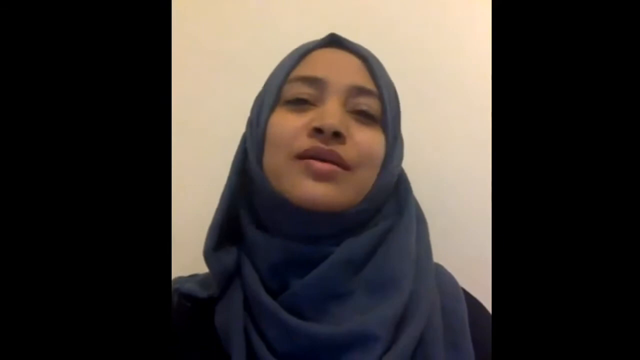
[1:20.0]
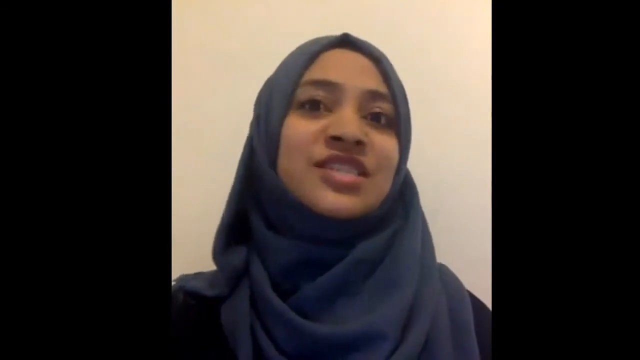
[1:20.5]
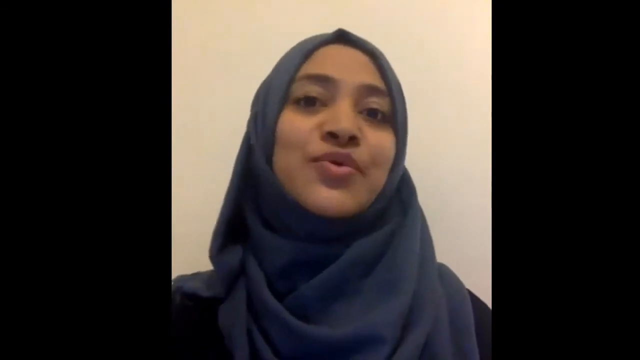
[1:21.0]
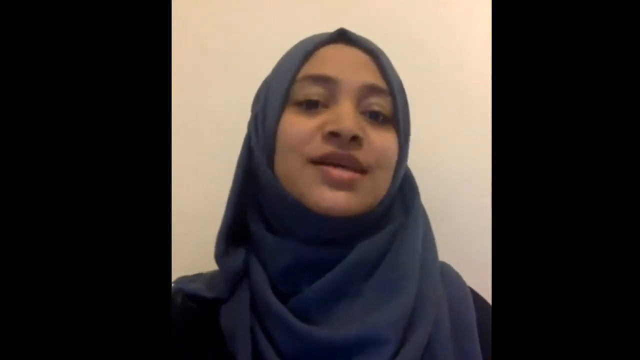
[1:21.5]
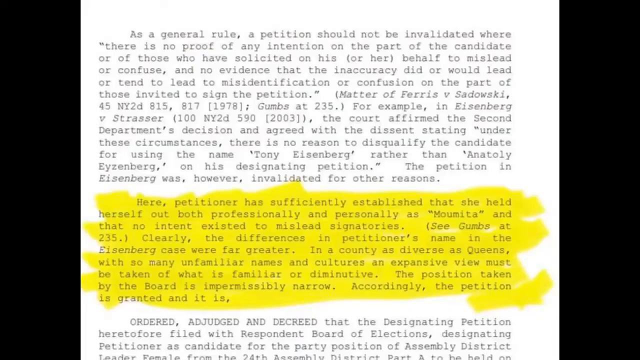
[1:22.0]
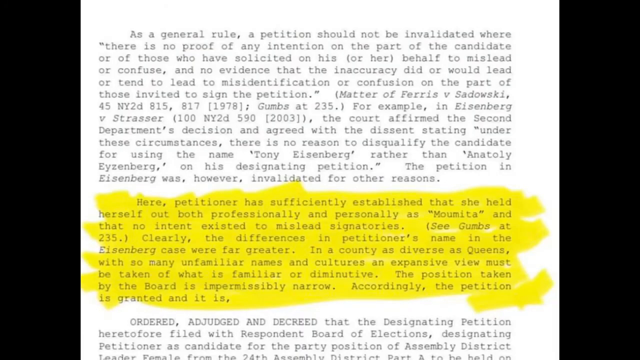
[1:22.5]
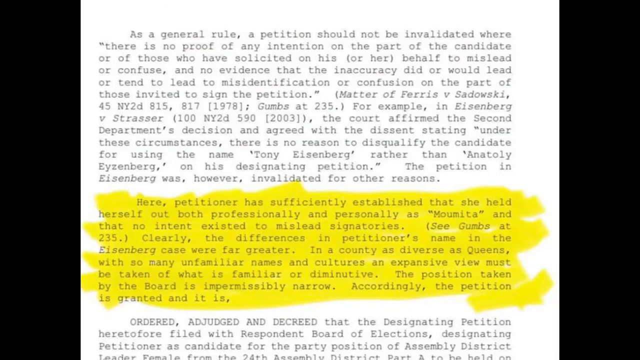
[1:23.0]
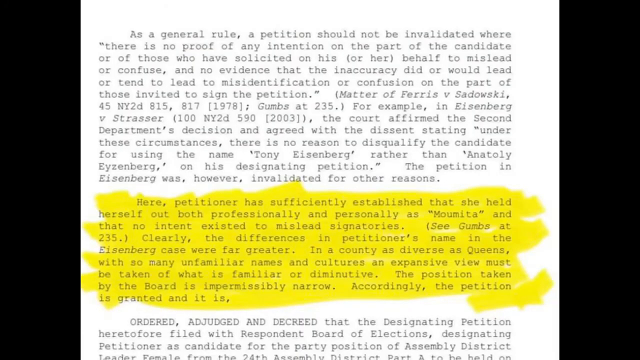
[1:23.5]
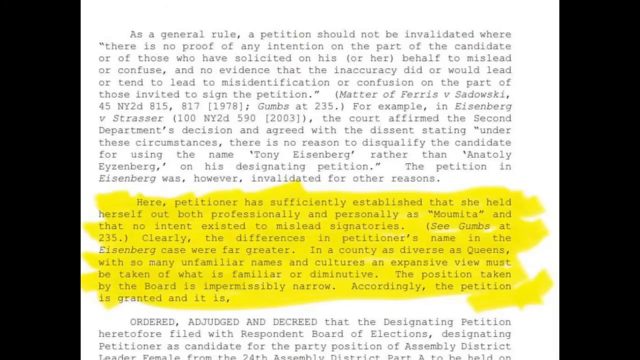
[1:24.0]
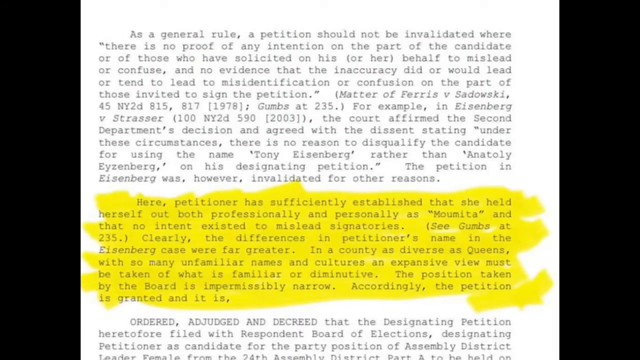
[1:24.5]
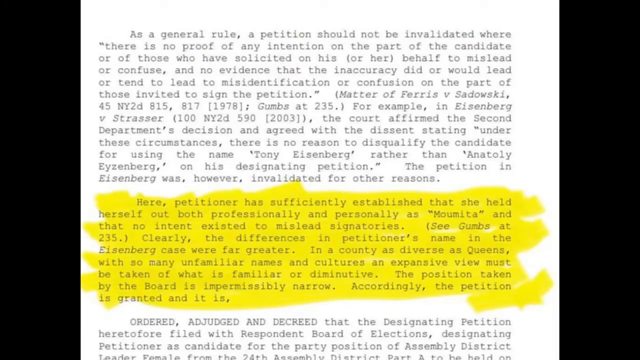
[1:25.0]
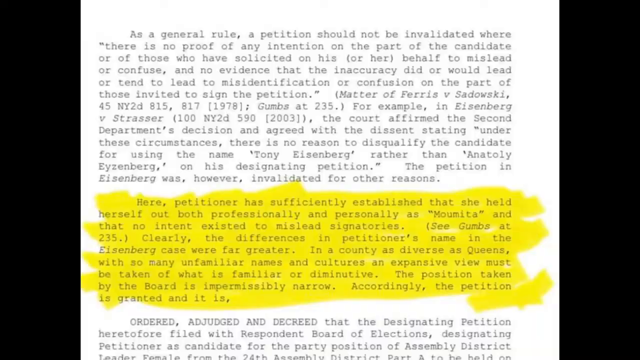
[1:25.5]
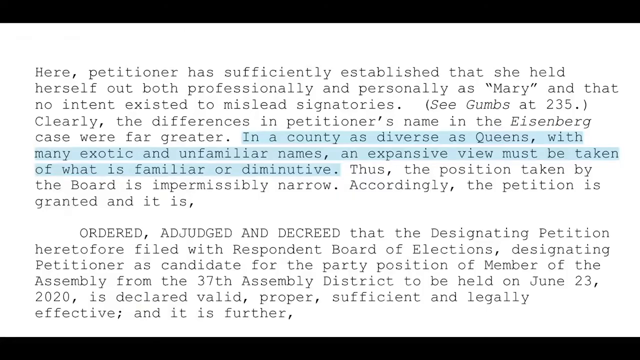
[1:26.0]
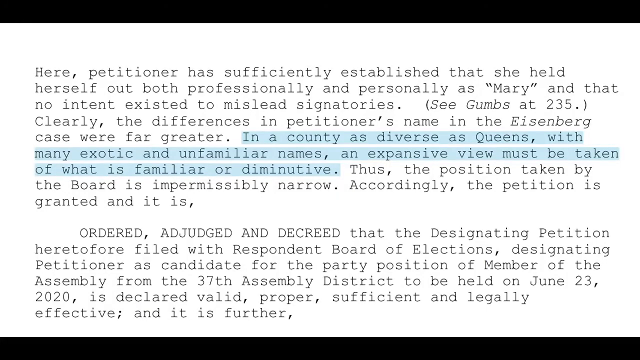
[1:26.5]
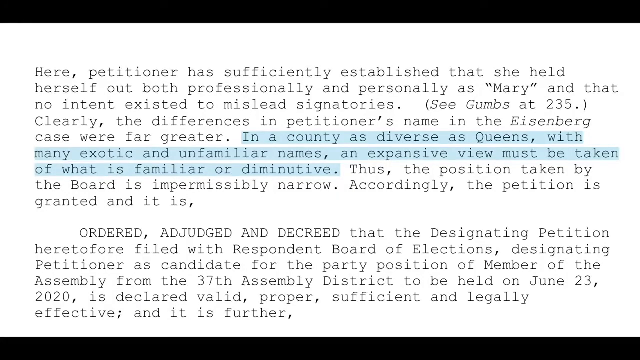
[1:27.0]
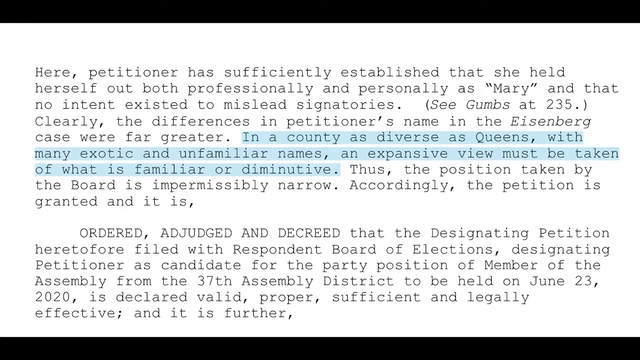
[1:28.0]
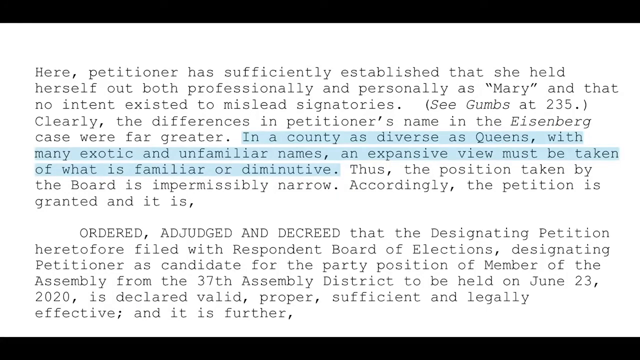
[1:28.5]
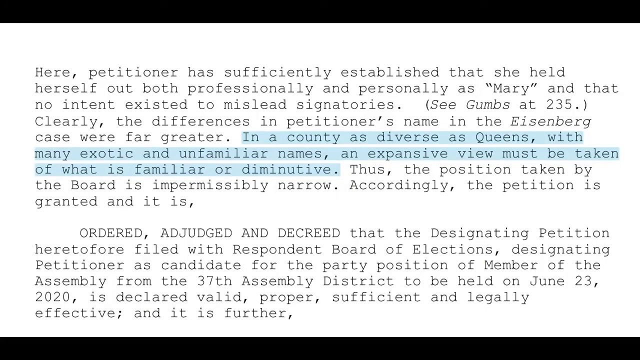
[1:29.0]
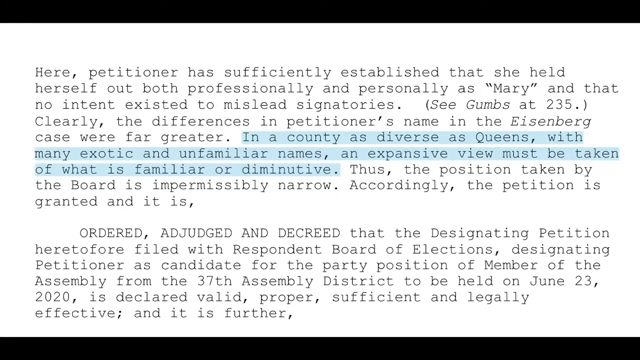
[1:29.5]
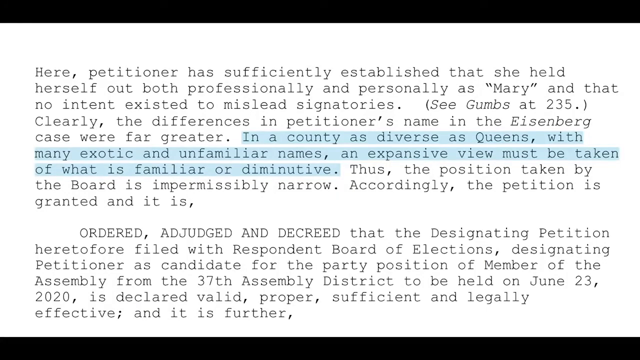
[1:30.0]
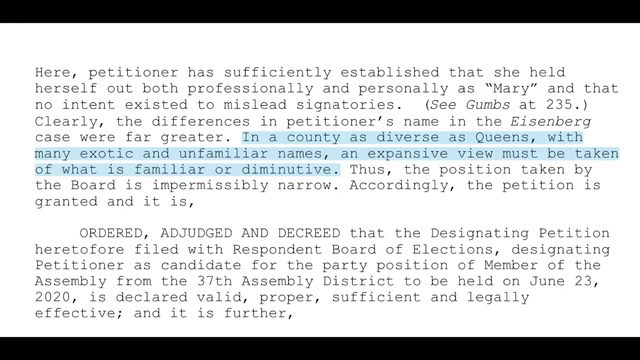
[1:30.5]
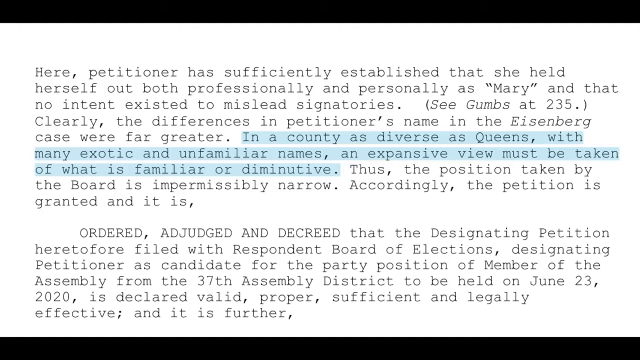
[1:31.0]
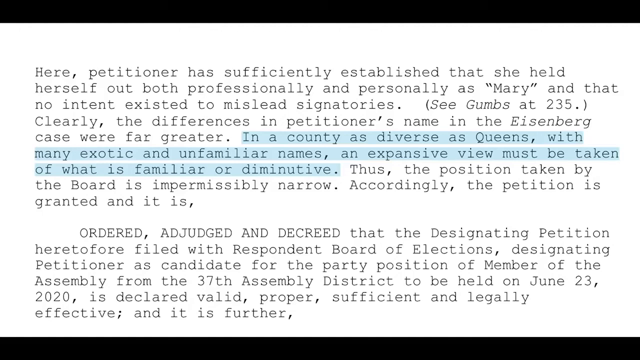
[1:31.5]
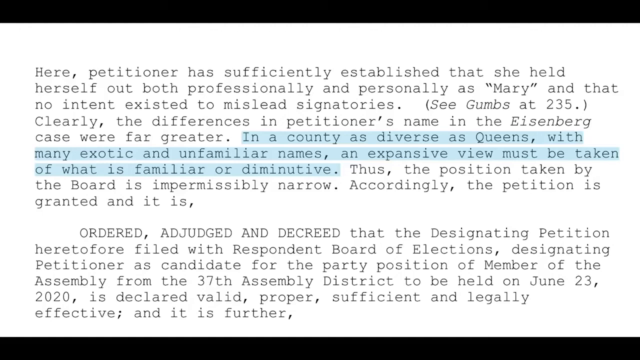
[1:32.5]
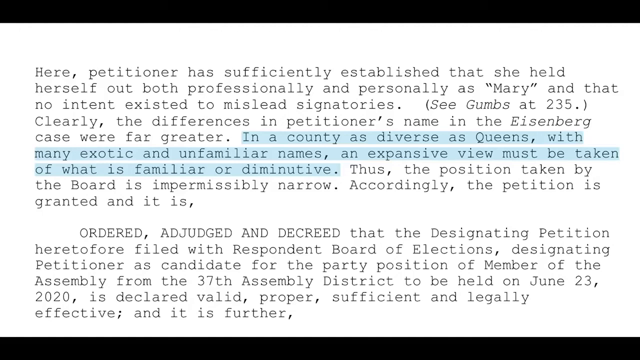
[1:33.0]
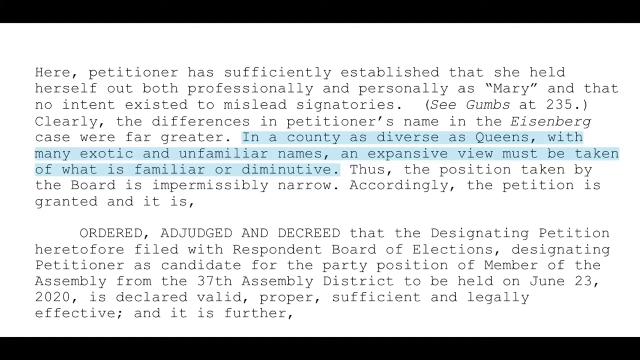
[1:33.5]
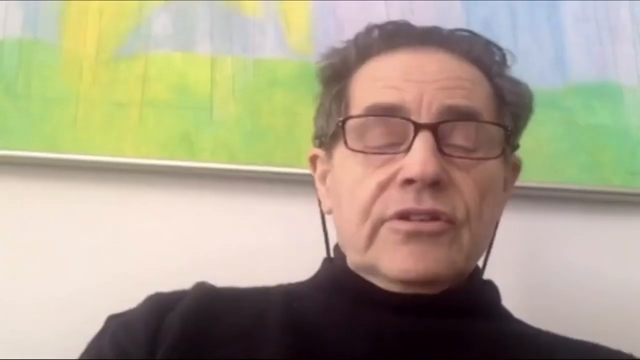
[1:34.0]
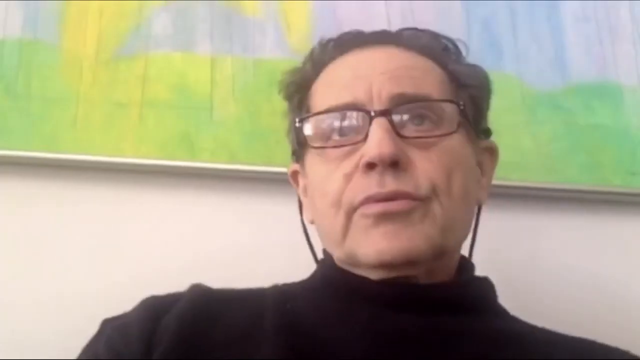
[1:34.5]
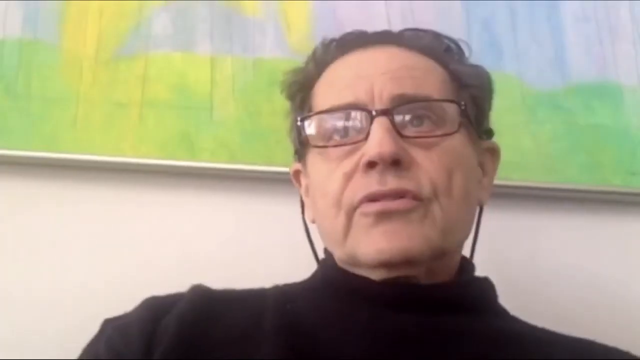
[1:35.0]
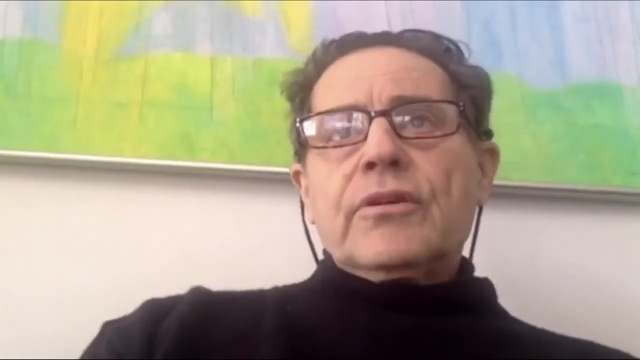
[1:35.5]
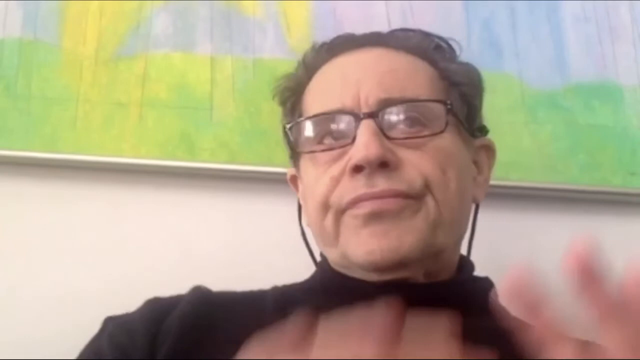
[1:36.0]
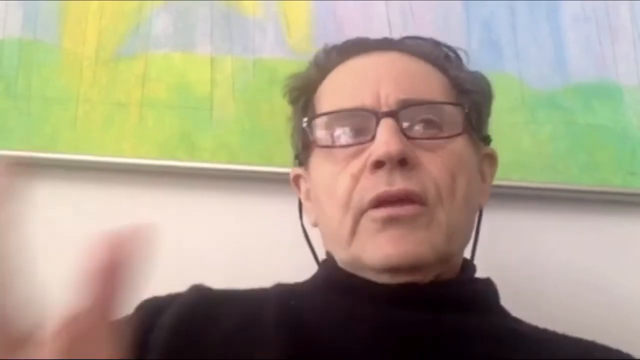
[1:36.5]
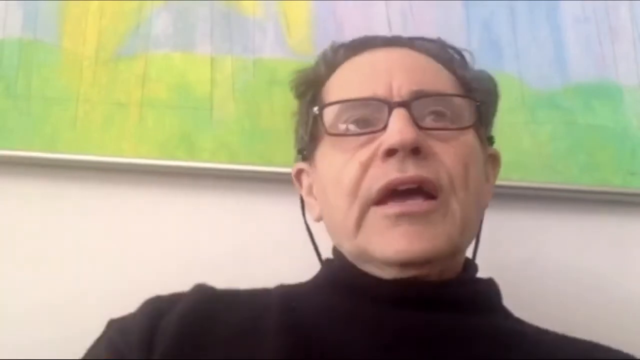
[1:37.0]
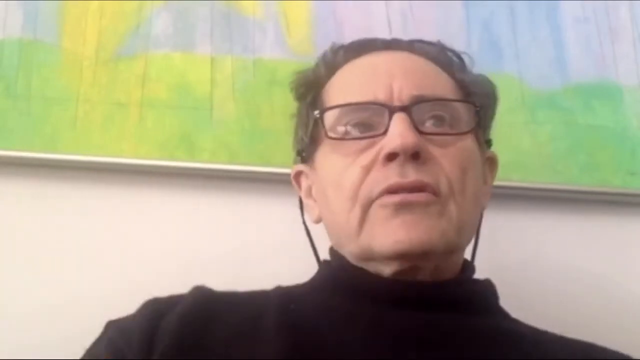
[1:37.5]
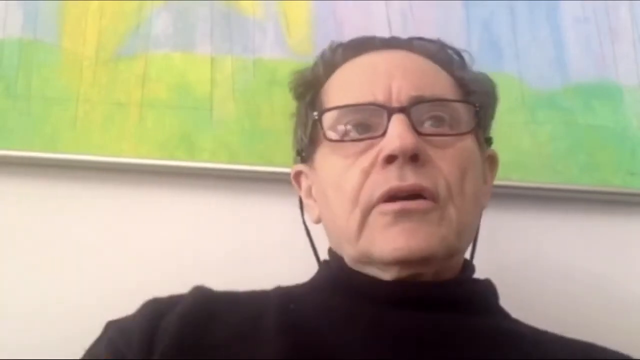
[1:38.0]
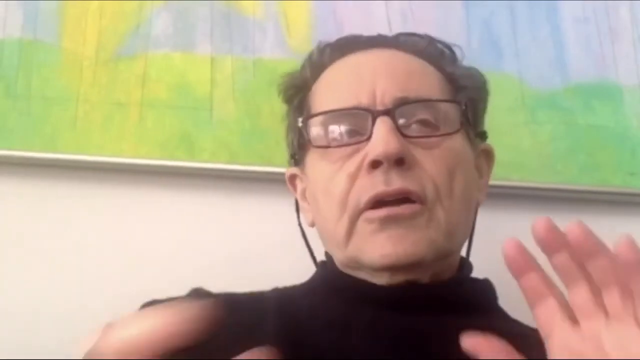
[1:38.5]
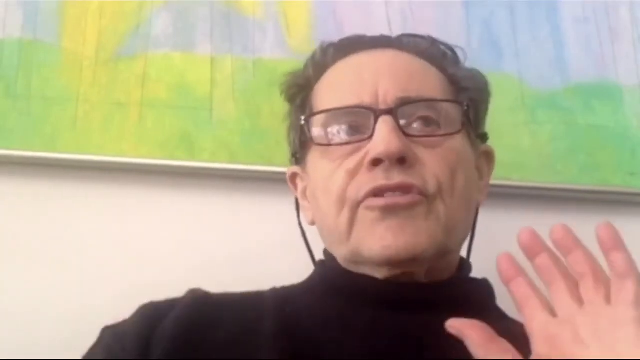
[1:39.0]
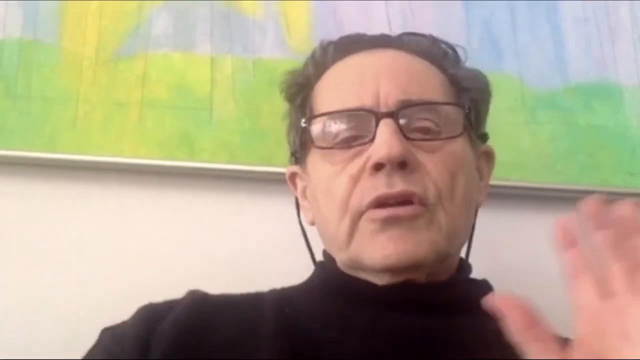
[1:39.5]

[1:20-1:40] The case goes to court. A petition is shown with text highlighted in yellow: "the petitioner has sufficiently established that she held herself out both professionally and personally as a momita and that no intent existed to mislead". A court file is then shown reading "in a county as diverse as Queens with many exotic and unfamiliar names, an expensive view must be taken of what is familiar". A political science professor also gives his view on the case.